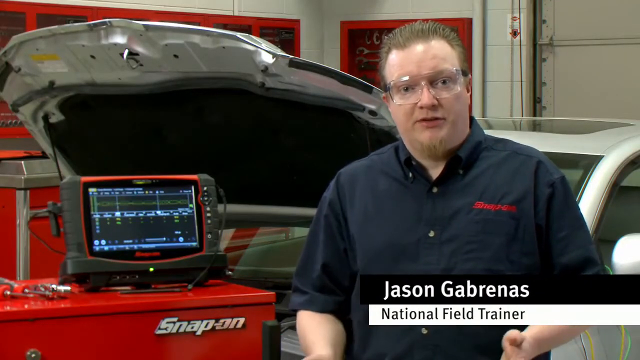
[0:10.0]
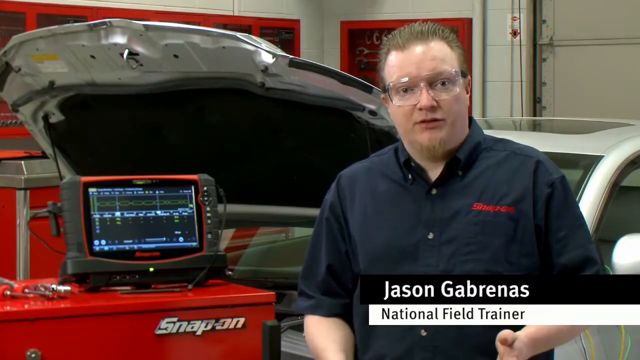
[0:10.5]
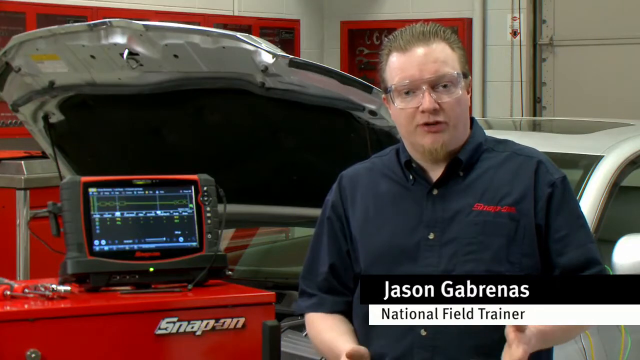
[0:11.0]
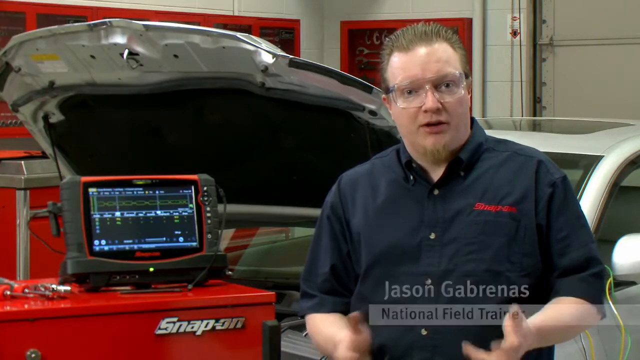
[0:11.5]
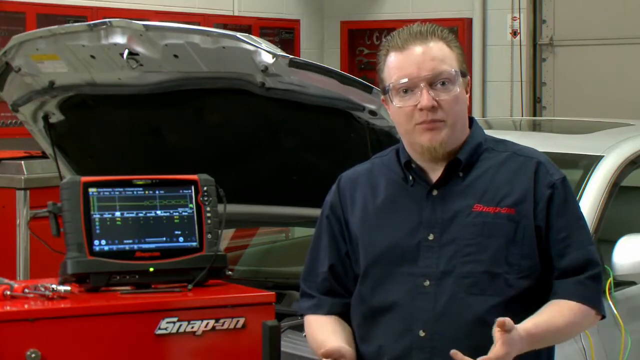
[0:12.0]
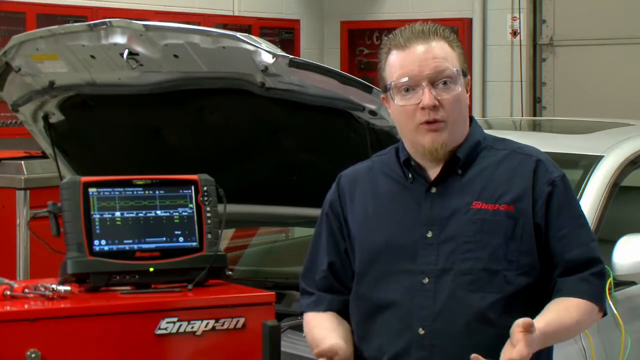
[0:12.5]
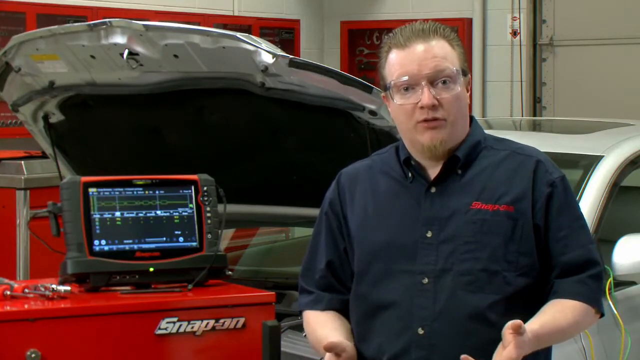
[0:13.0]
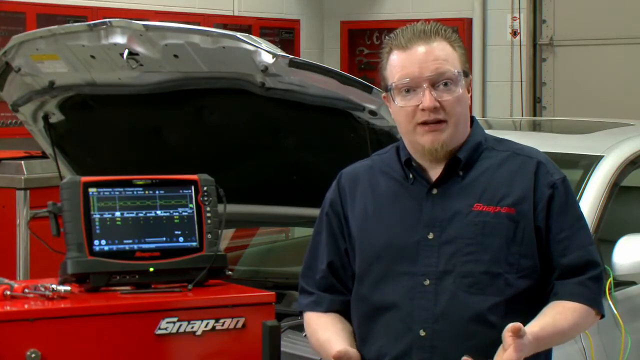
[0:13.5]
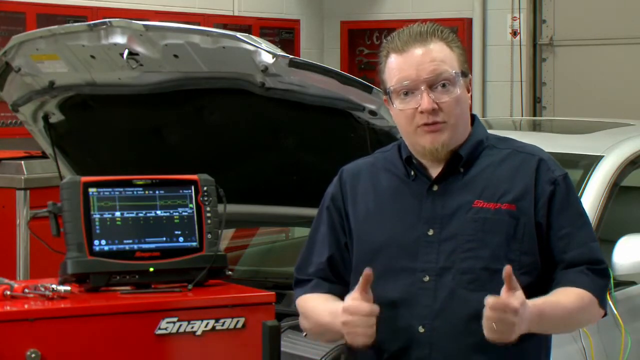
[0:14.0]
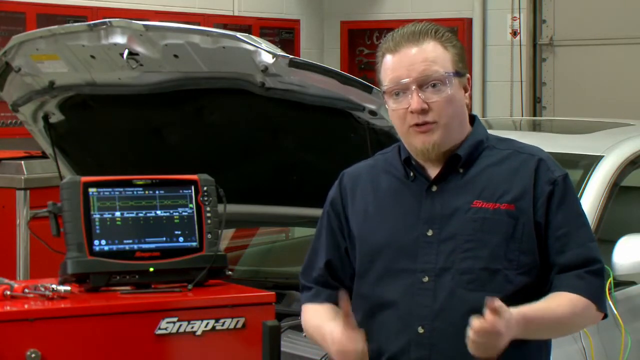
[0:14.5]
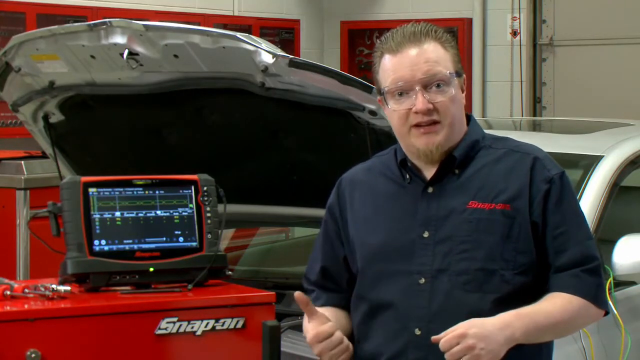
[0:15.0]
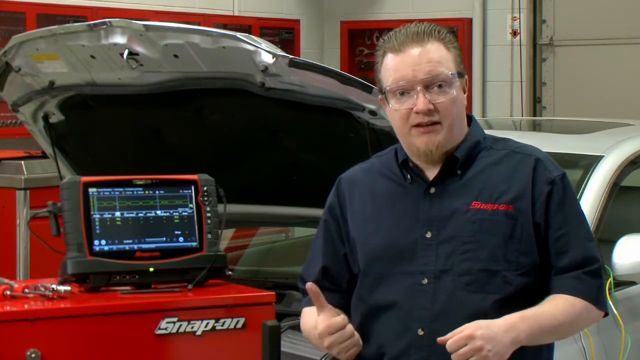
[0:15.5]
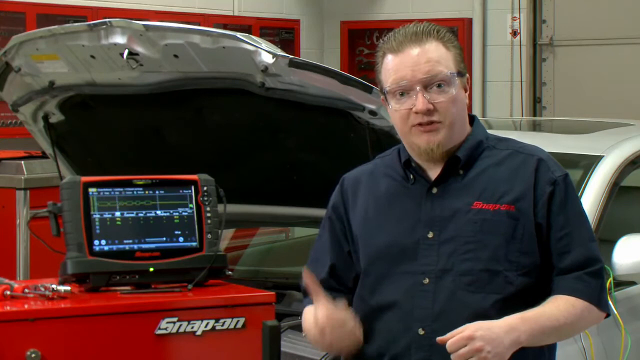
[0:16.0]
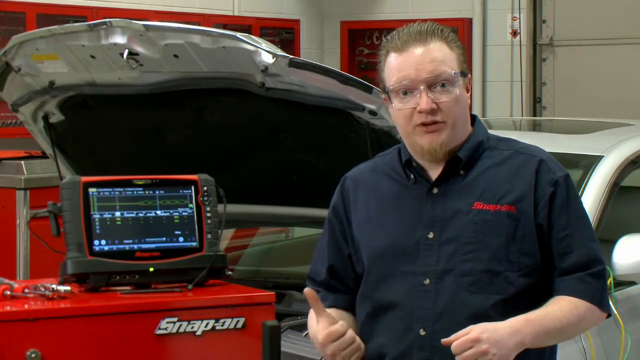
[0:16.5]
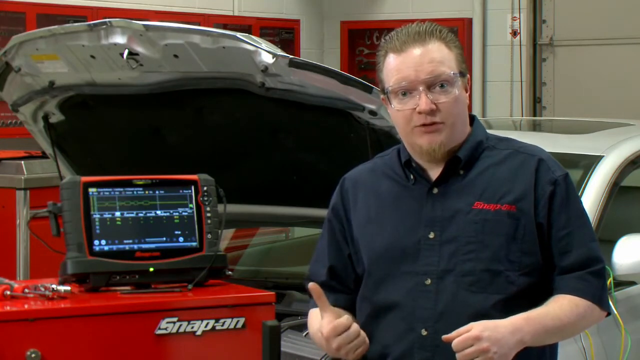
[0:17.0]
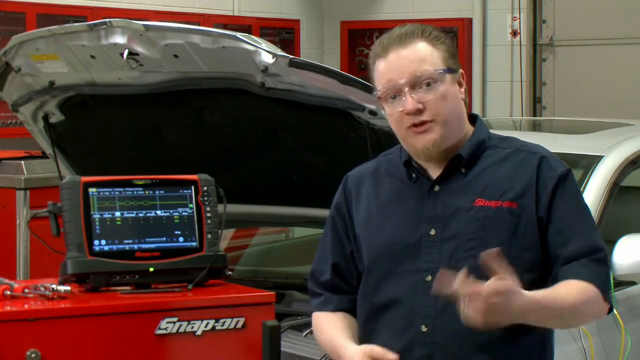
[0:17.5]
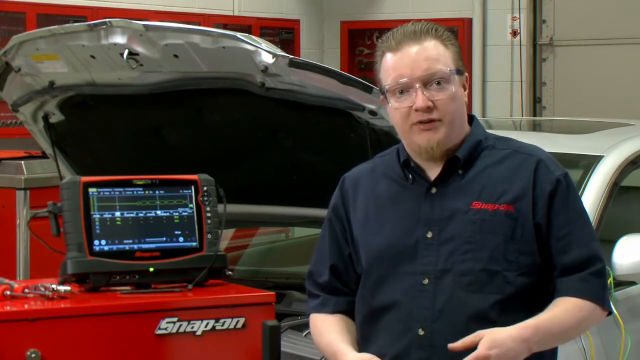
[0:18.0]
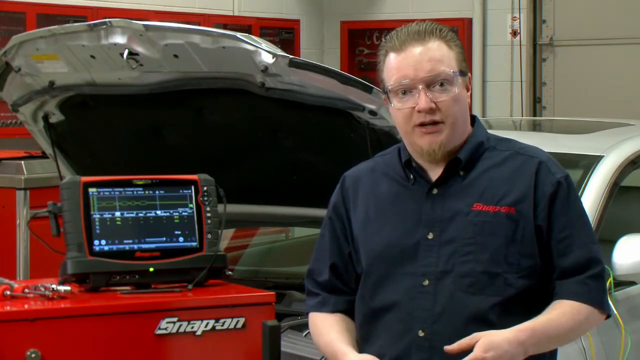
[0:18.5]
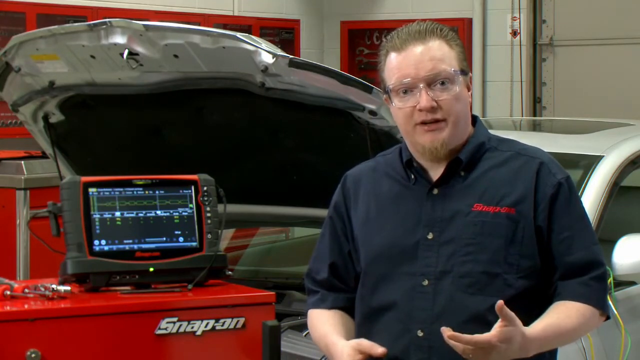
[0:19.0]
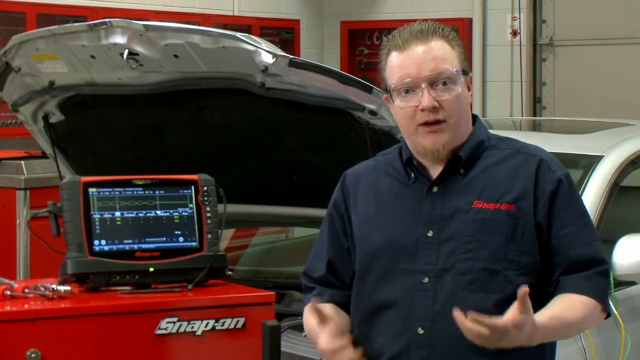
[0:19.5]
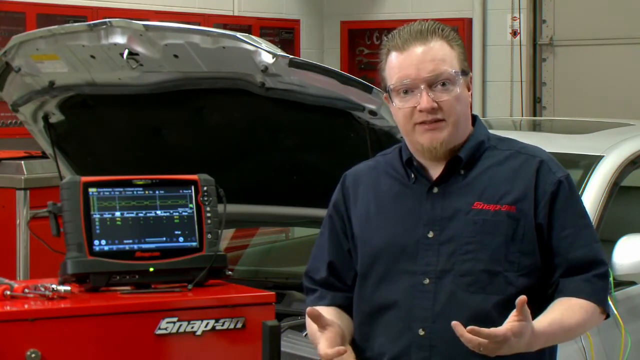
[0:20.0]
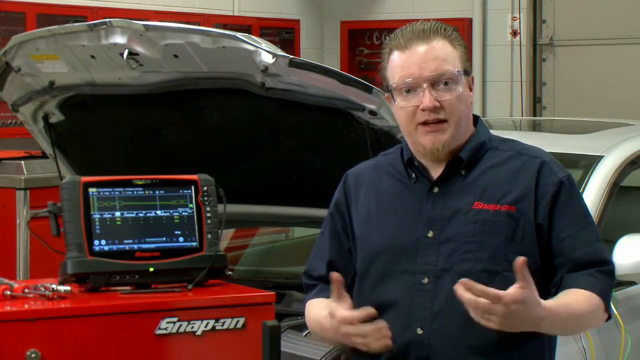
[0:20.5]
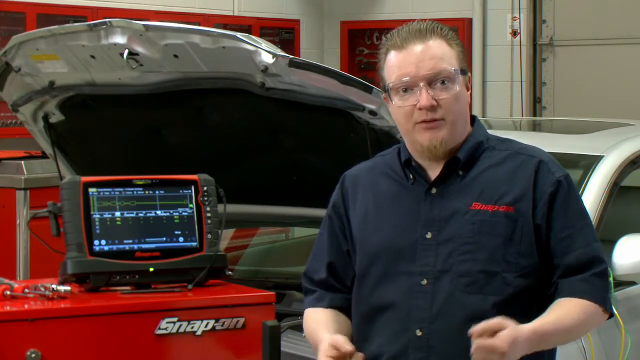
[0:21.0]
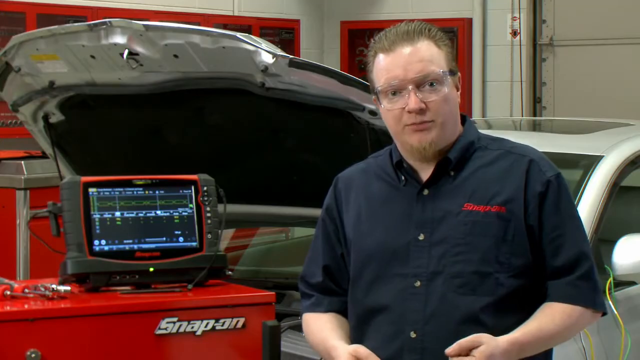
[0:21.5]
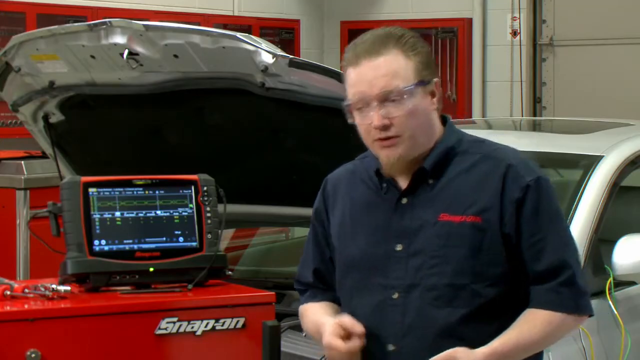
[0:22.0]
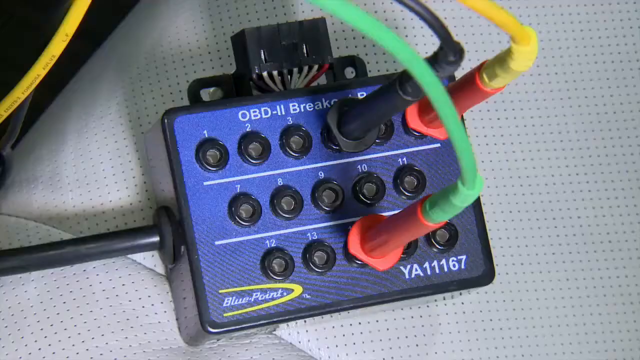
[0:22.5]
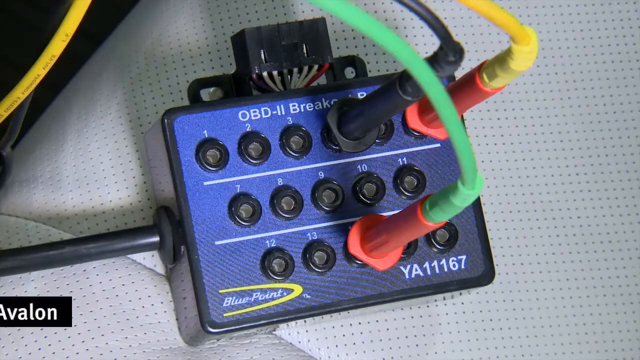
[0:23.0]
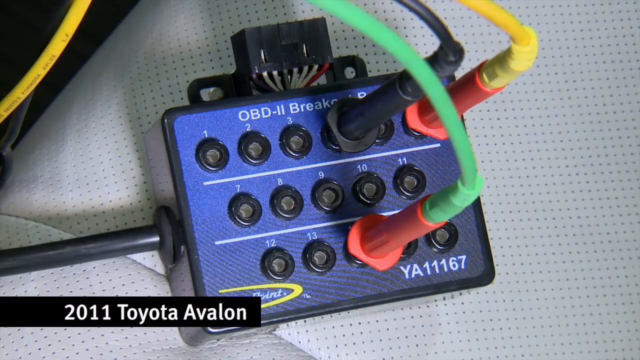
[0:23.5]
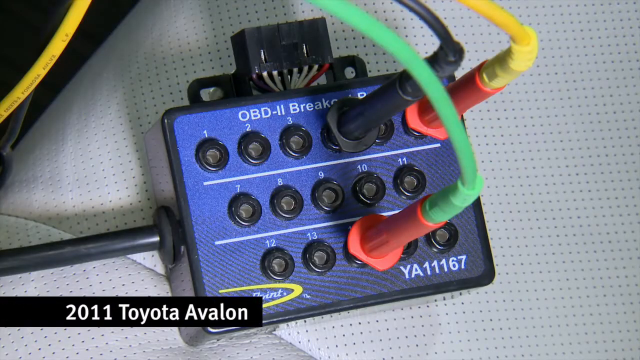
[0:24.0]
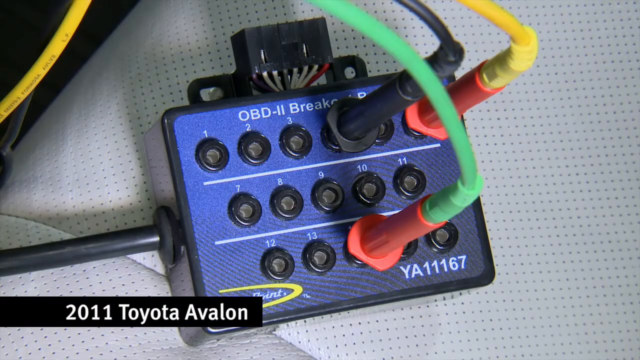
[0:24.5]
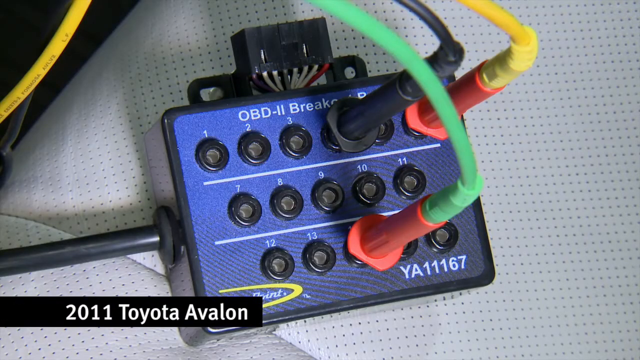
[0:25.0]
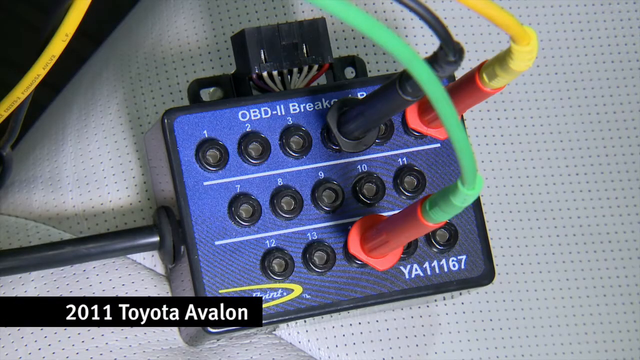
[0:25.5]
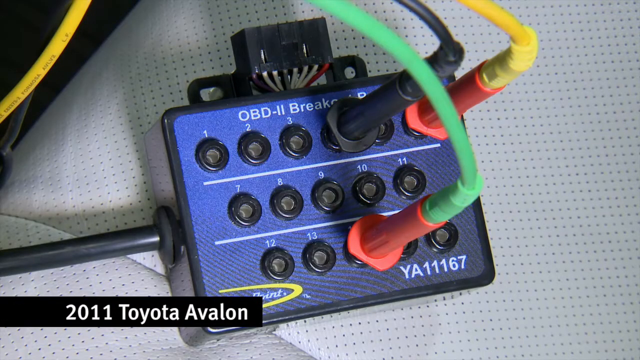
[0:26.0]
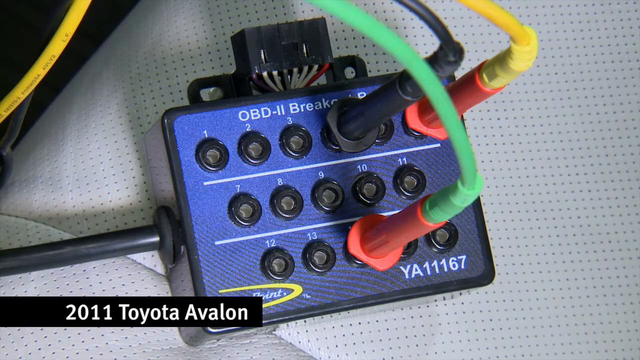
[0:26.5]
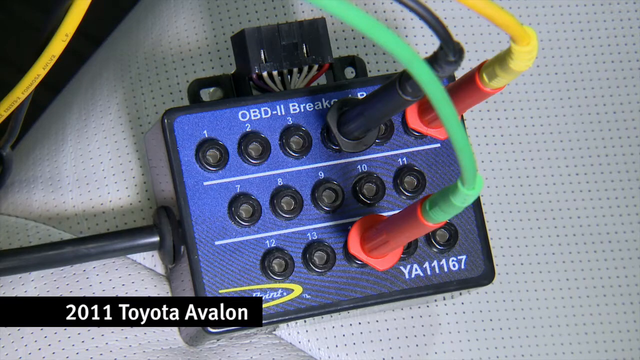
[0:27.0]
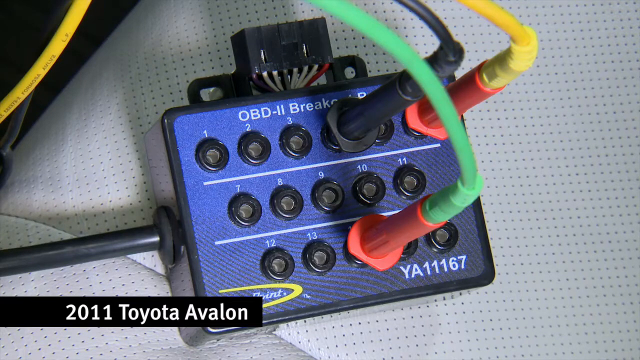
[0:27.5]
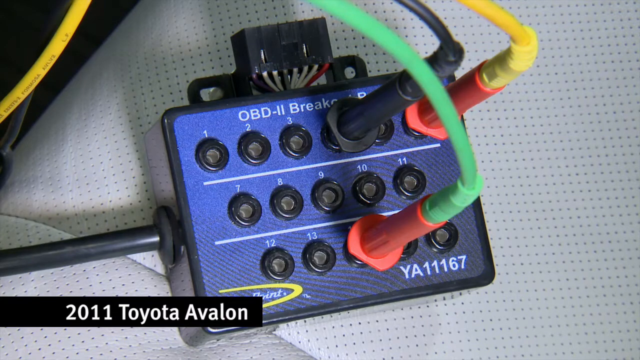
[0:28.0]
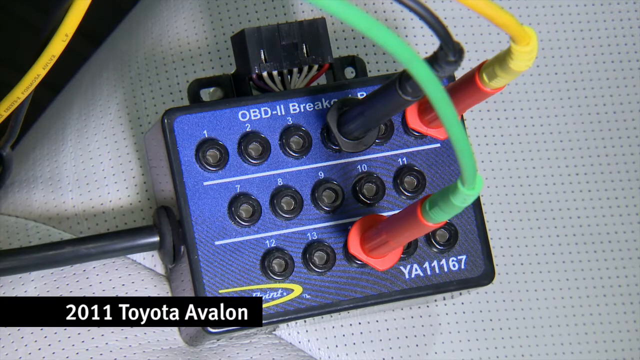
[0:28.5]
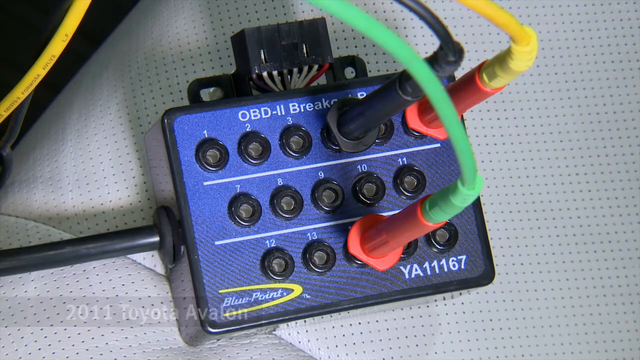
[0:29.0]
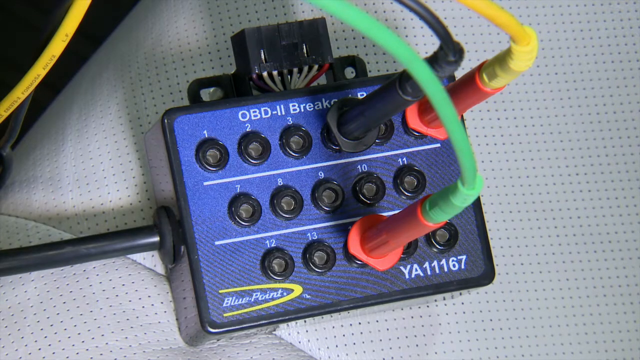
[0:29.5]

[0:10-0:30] National field trainer Jason Gabrinas, who works for Snap-on, sits in front of a silver car with its hood open, talking directly into the camera. To his left is a display that apparently gives diagnostics on the car. Next to the display, some tools are laying on top of a red Snap-on box. The camera then cuts to a blue OBDII breaker. Text in the lower left corner reads "2011 Toyota Avalon," so the open silver car behind the trainer is a 2011 Toyota Avalon. Several wires are plugged into the breaker: a red base with a lime green cord, a black base with a black cord, and a red base with a yellow cord. The lower right corner shows "YA11167."